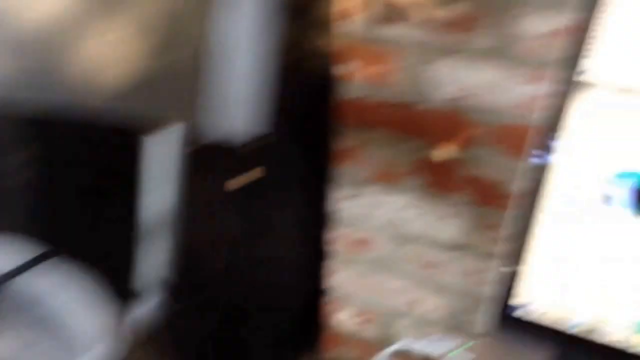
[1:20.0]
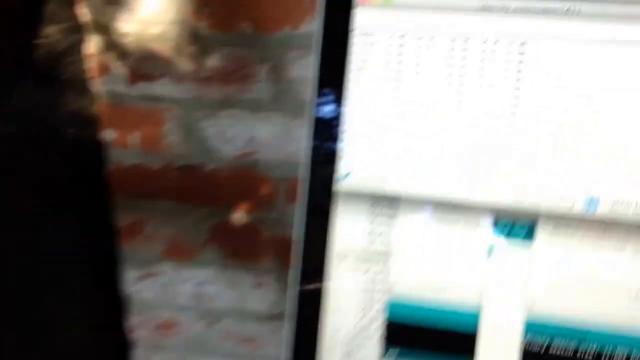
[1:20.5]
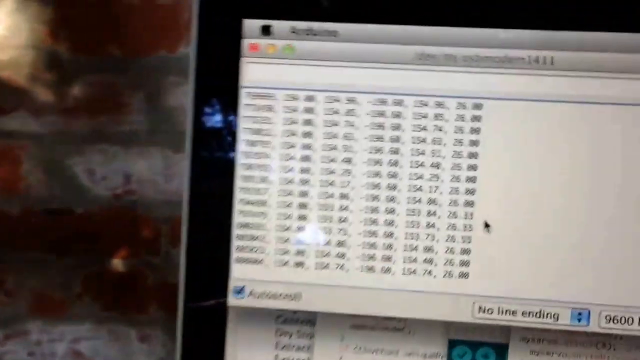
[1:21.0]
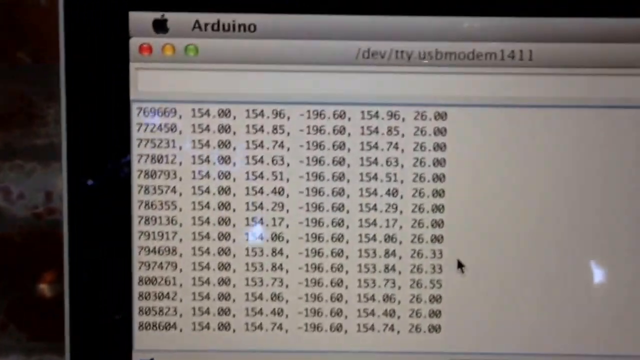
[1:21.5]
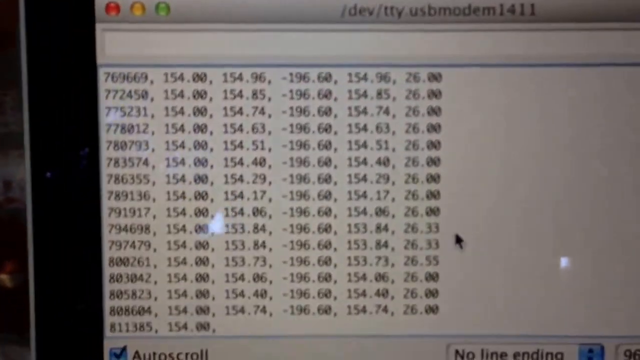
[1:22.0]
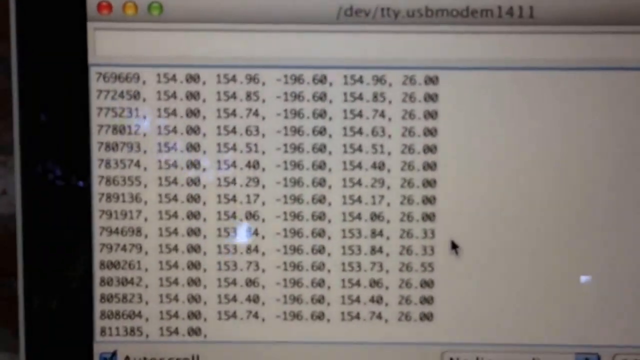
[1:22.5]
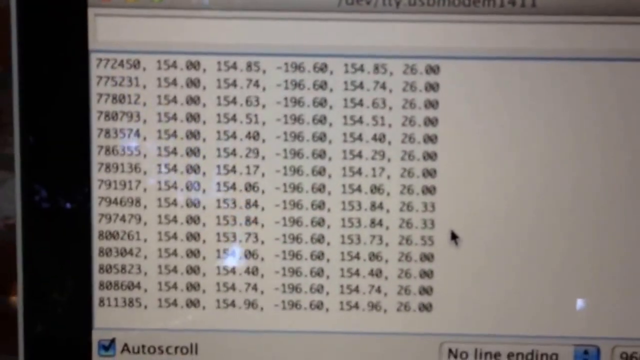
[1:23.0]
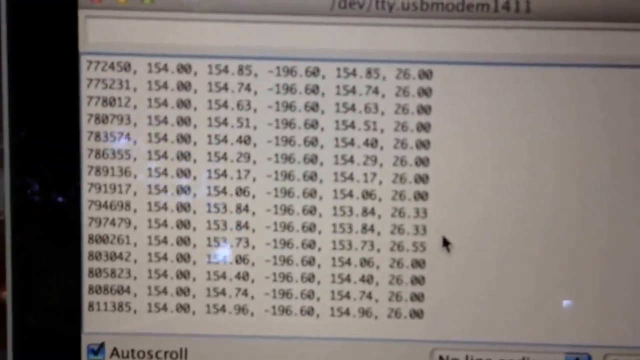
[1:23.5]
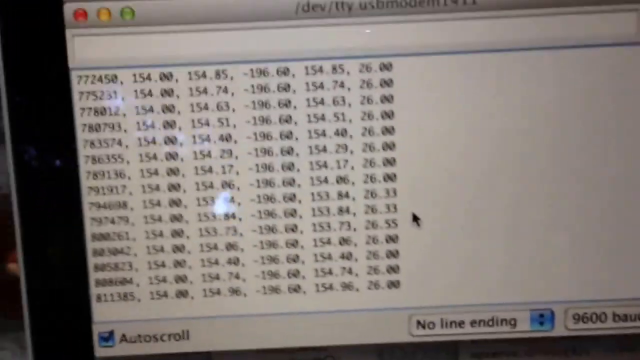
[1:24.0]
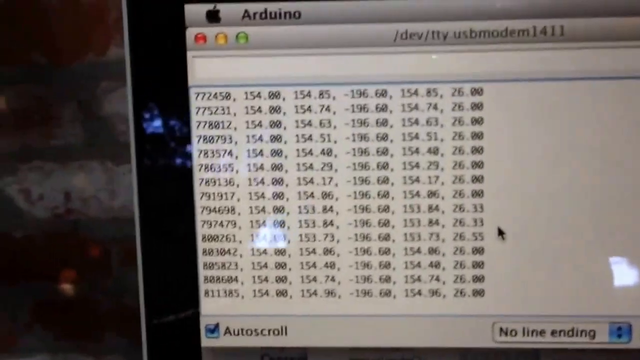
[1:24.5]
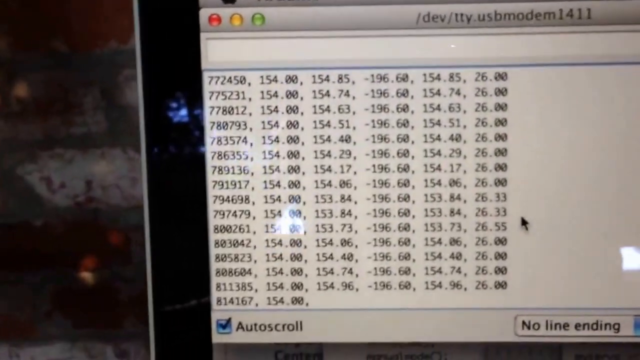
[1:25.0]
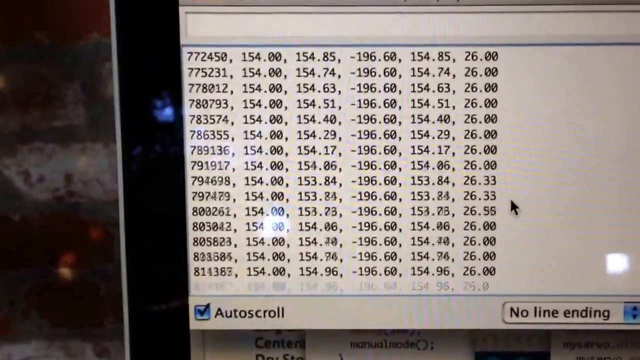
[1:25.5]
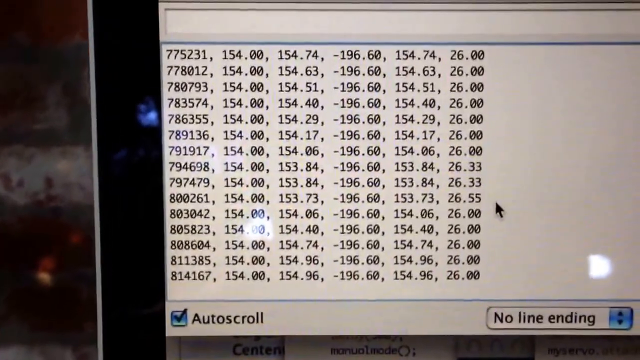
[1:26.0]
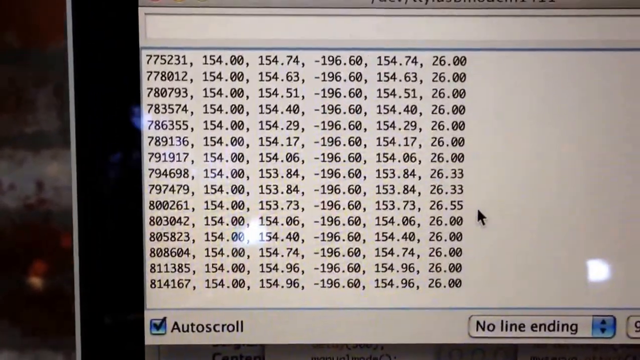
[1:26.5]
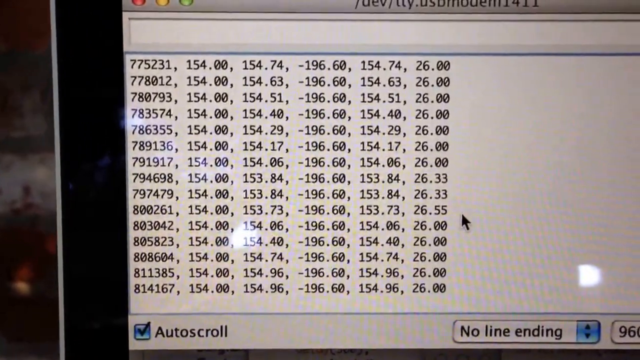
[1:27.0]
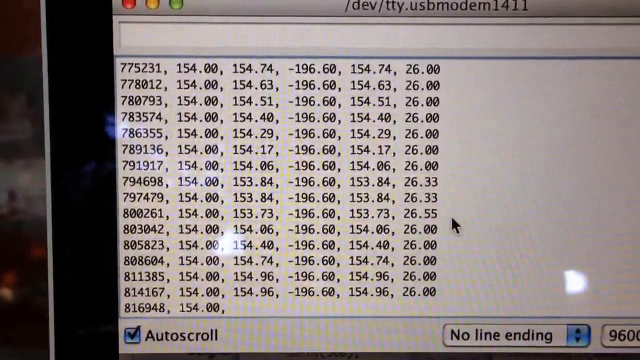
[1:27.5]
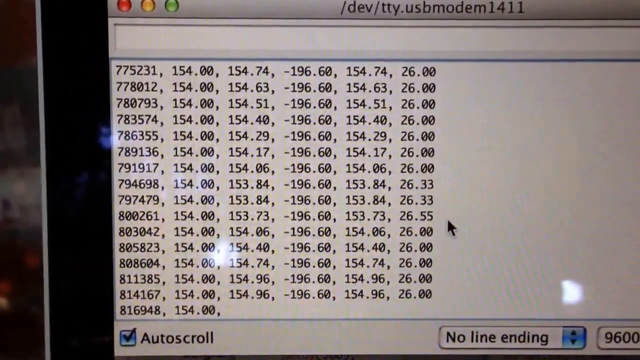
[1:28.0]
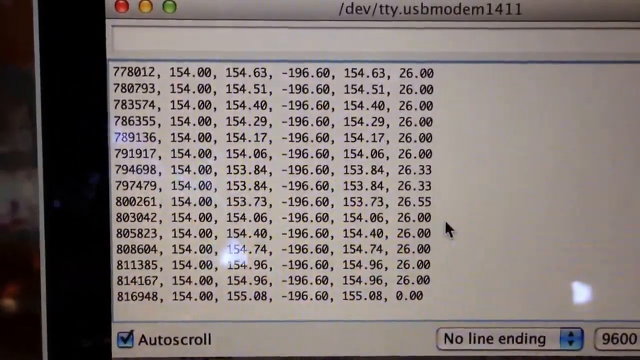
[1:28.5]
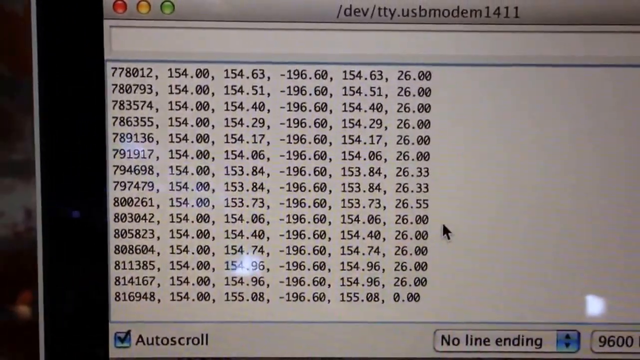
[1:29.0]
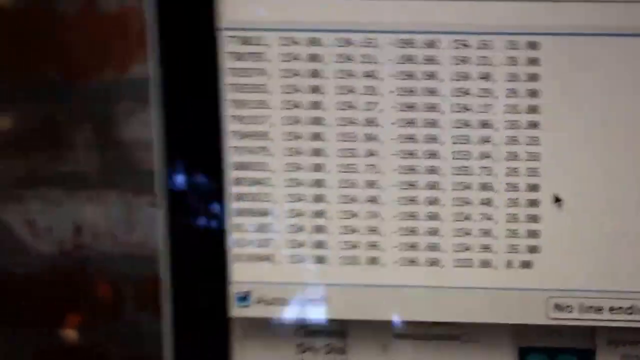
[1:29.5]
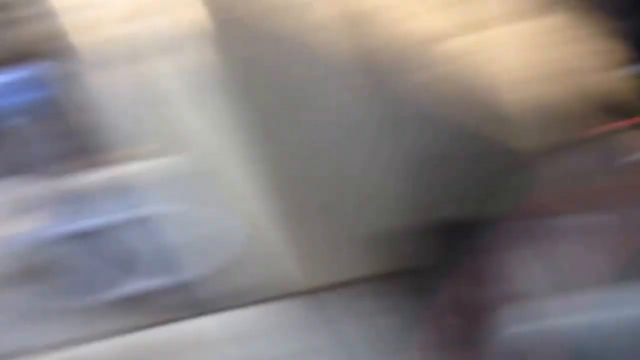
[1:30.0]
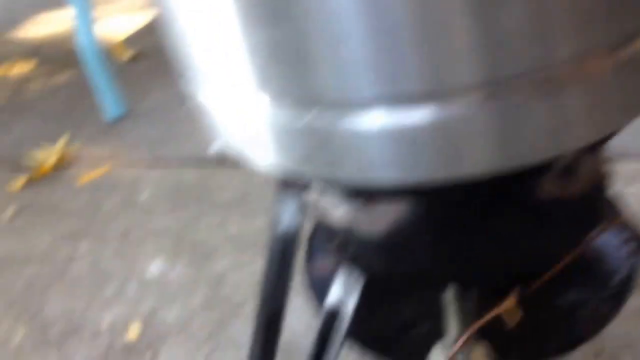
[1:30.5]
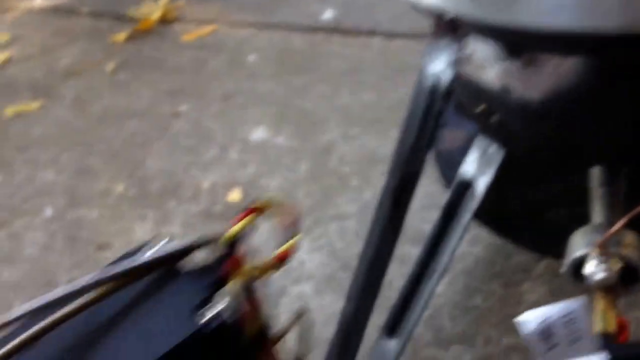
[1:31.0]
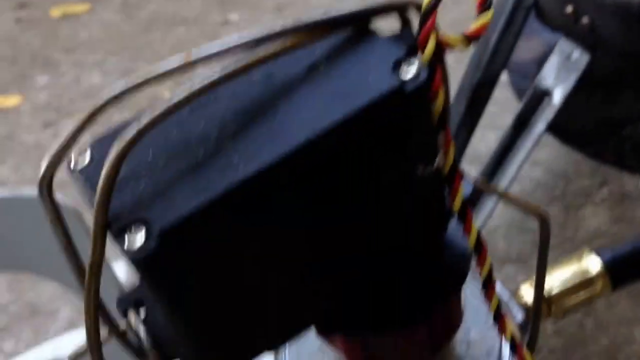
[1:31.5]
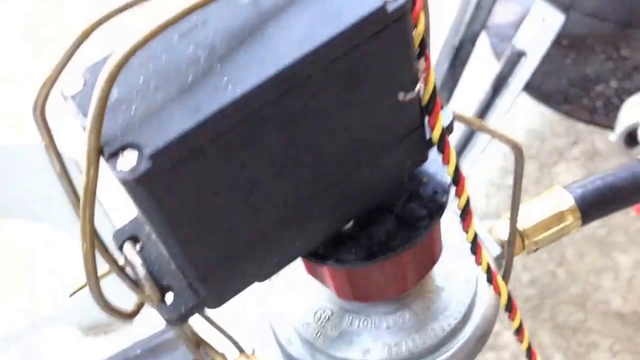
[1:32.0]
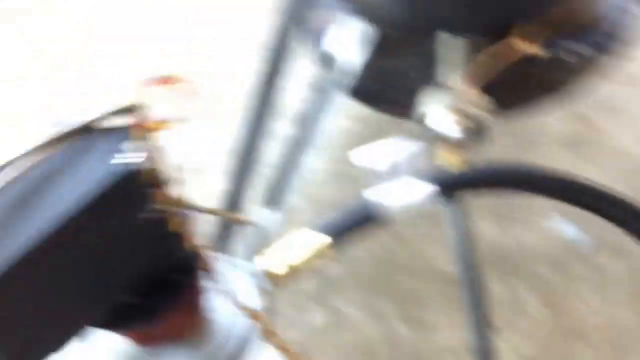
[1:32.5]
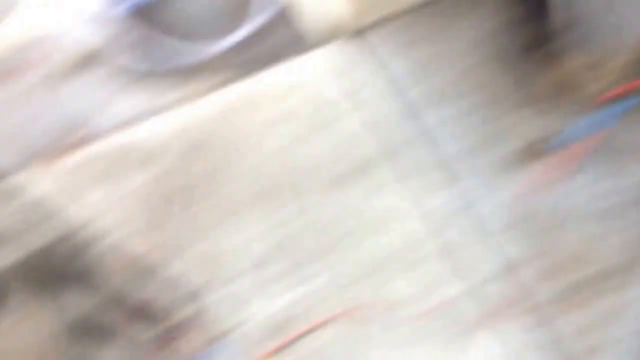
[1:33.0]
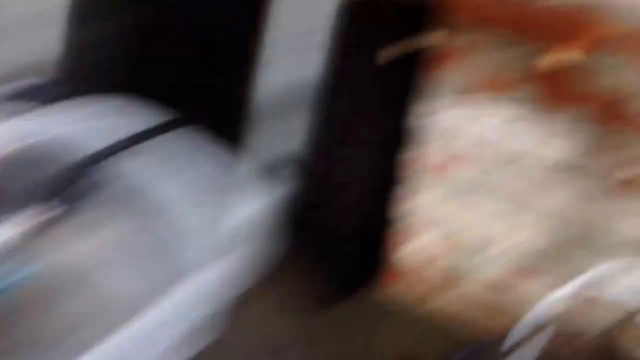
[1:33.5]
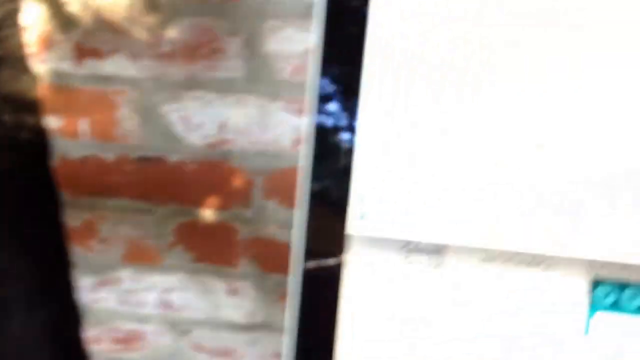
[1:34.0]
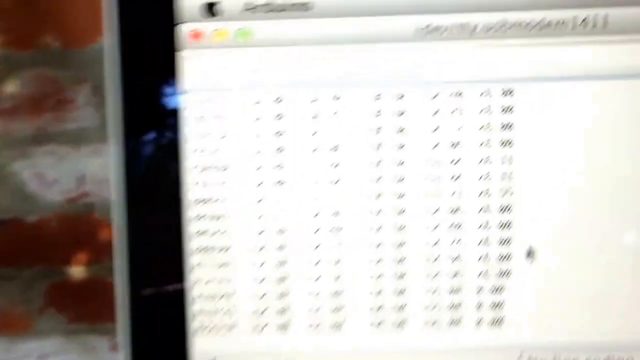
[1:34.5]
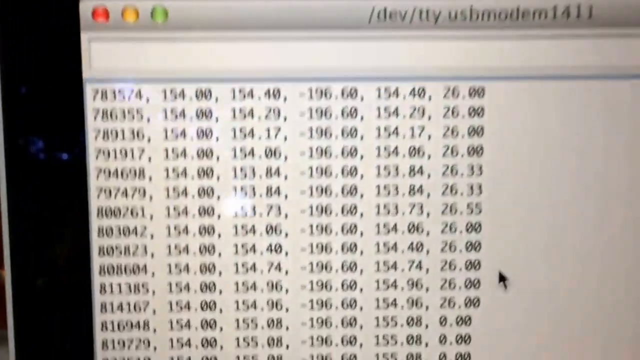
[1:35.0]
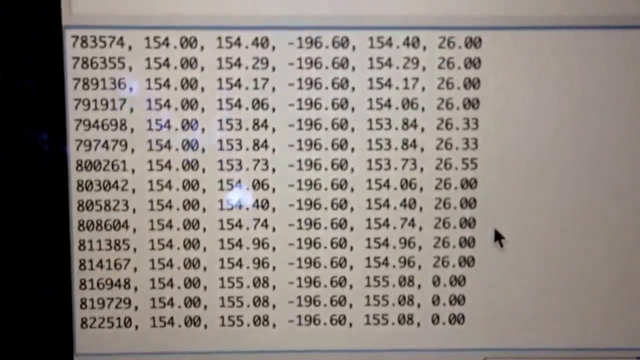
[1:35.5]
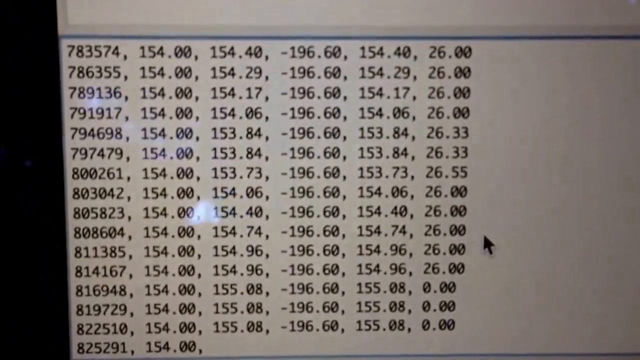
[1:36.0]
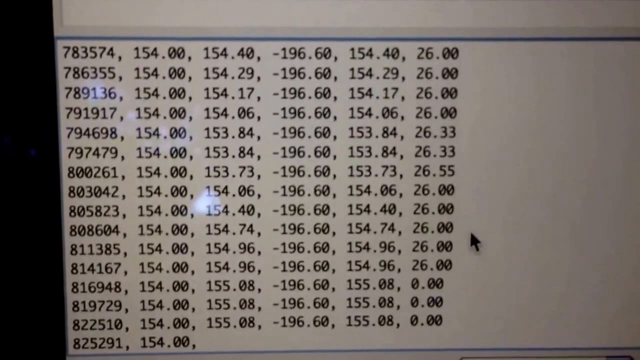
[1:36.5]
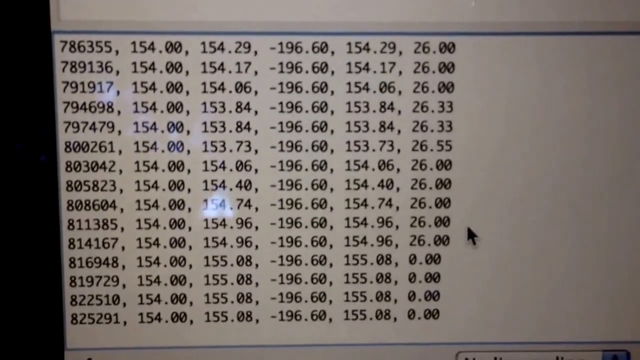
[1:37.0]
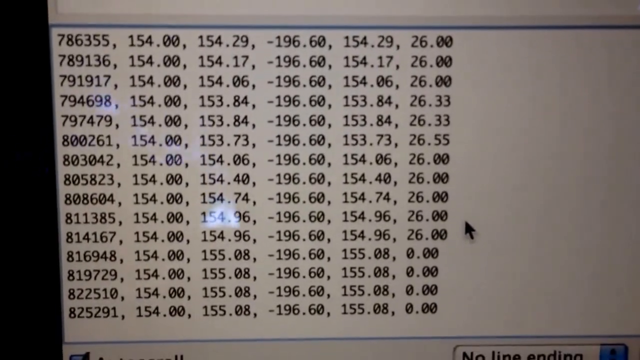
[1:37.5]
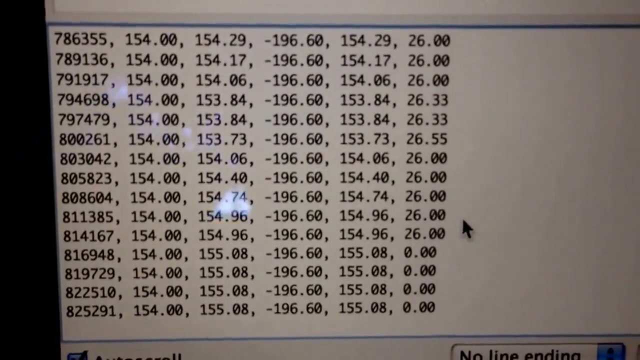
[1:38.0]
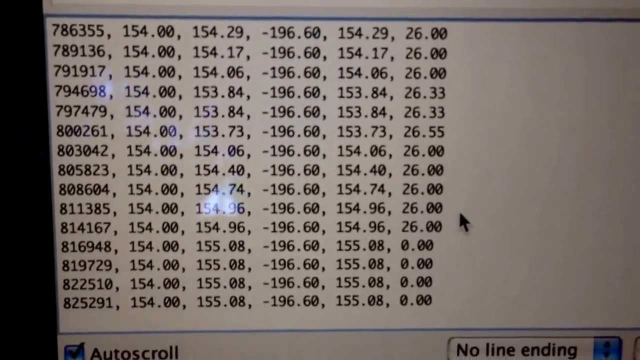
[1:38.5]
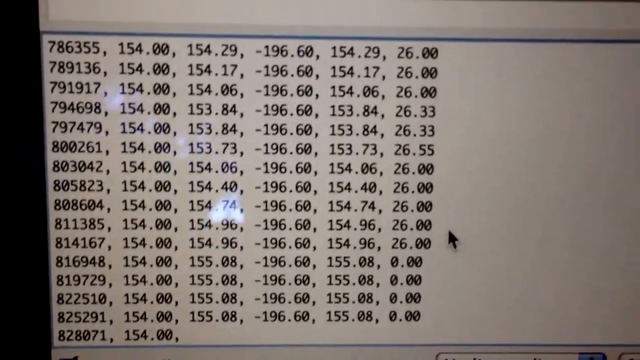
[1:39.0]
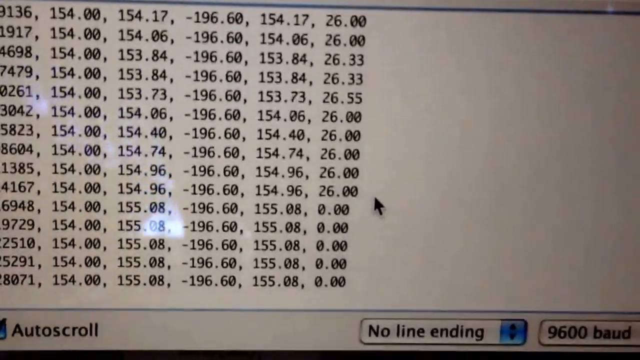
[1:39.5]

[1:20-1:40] The camera zooms in on the screen of what appears to be an Apple macOS laptop running Arduino control software. A teletype USB modem text-mode screen shows multiple numbers printed on it, apparently telemetry data. The camera then moves around to show what appears to be a servo motor attached to the valve of a gas canister, and then zooms back to the numbers on the MacBook screen. The setup is seemingly a control device regulating the release of gas from the gas canister to a camping stove based on feedback from a temperature sensor in the liquid, controlled by an Arduino microcontroller board and software on the MacBook. The setting is an outside area: behind the MacBook is a bare red brick outside wall, and the MacBook appears to be resting on an outside table.